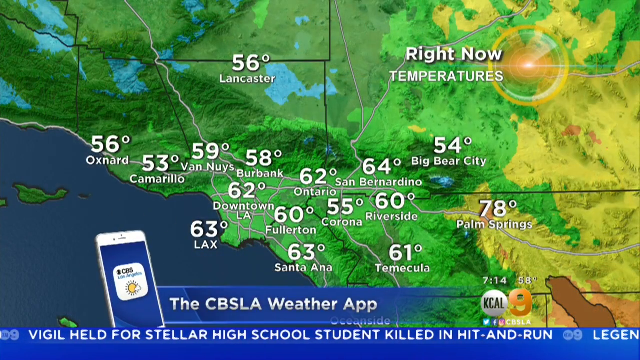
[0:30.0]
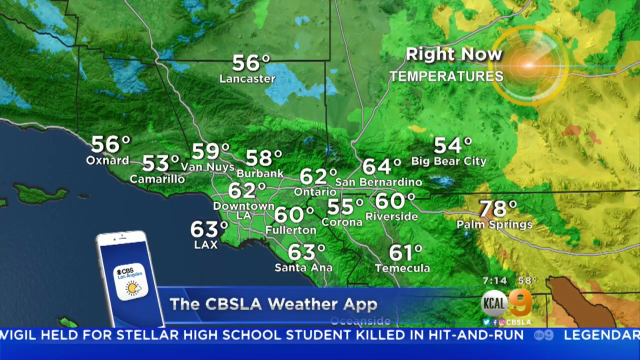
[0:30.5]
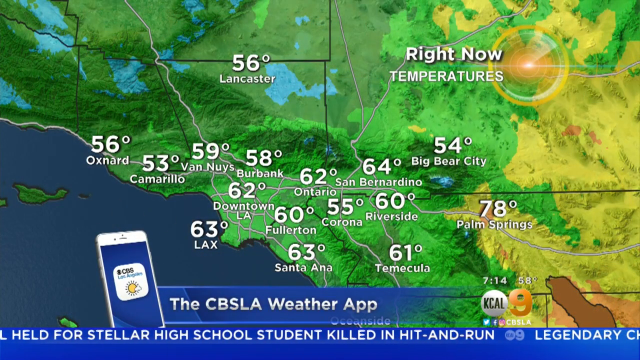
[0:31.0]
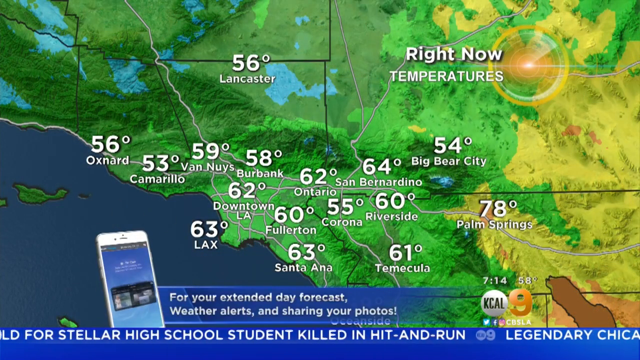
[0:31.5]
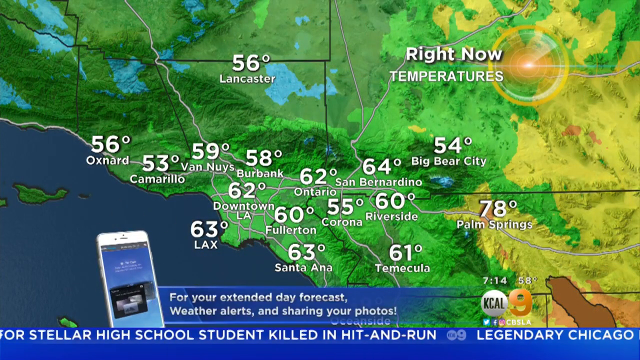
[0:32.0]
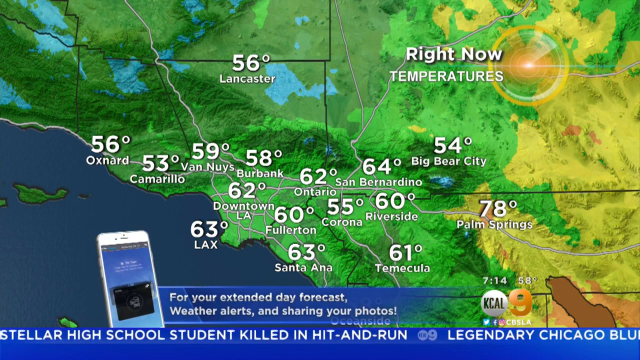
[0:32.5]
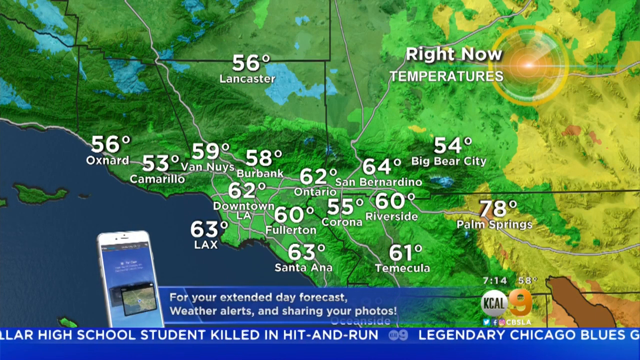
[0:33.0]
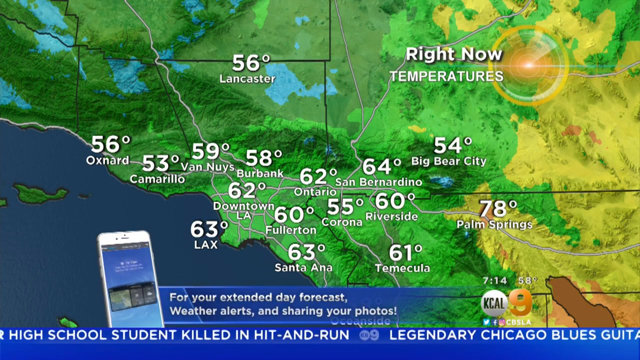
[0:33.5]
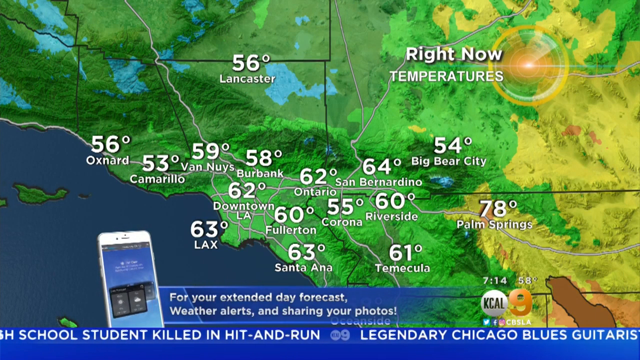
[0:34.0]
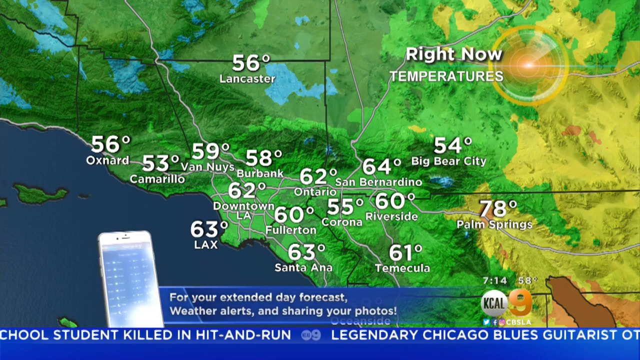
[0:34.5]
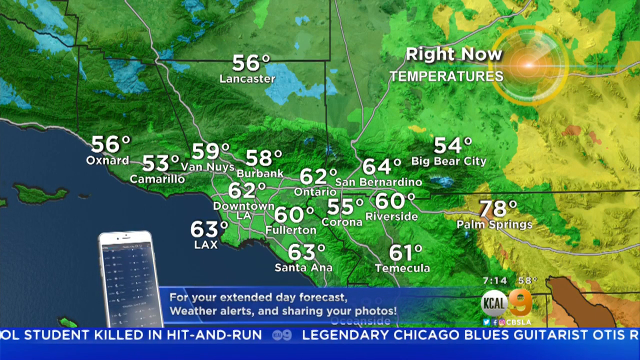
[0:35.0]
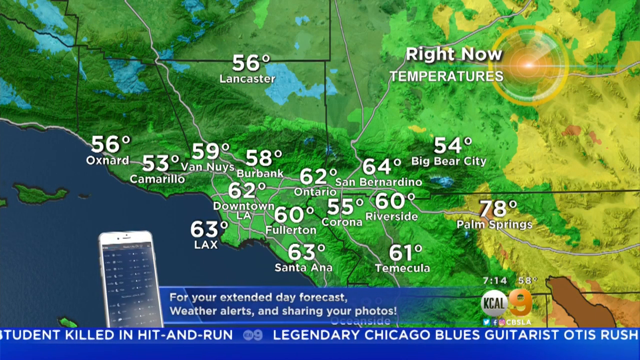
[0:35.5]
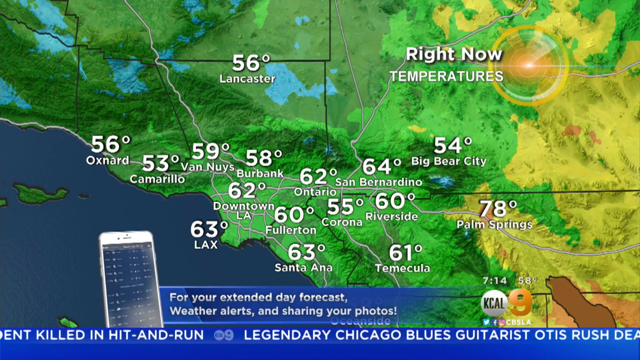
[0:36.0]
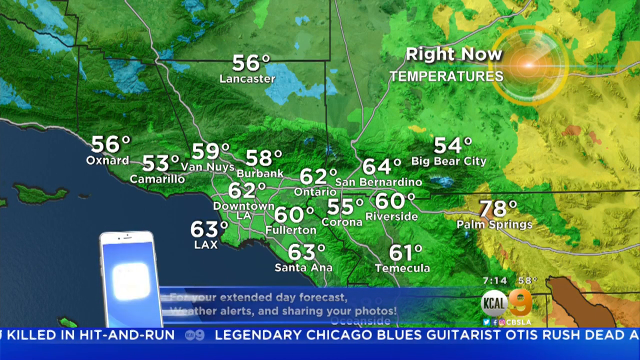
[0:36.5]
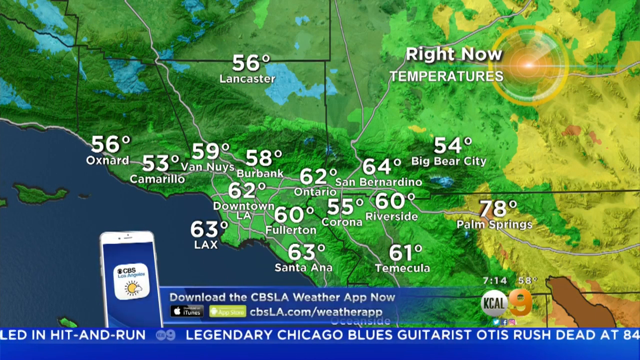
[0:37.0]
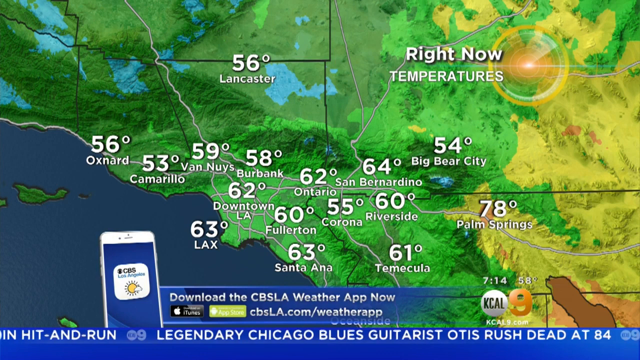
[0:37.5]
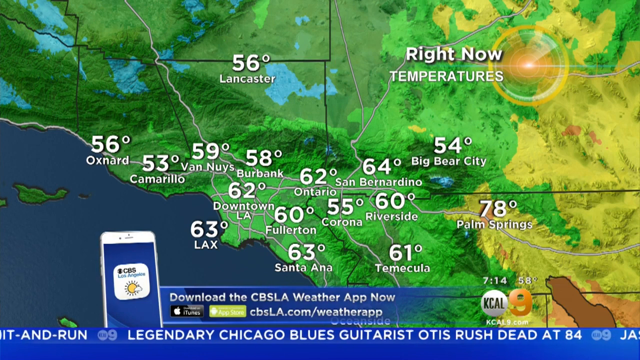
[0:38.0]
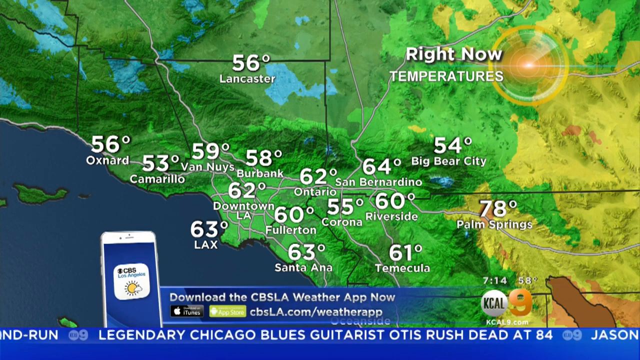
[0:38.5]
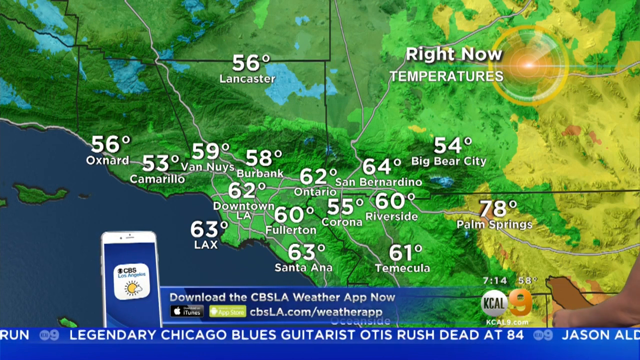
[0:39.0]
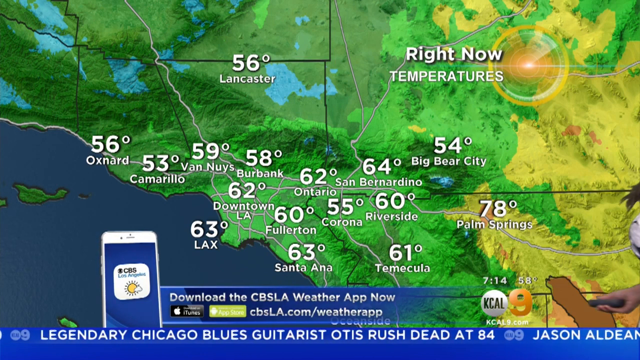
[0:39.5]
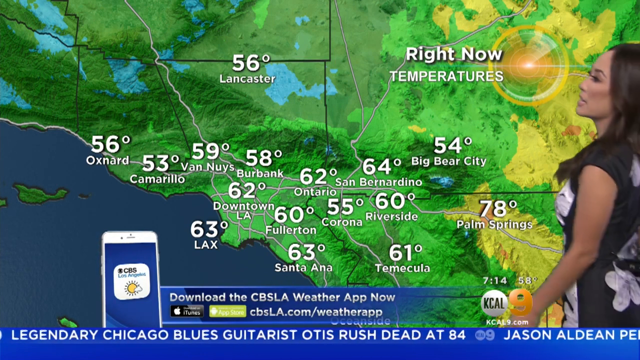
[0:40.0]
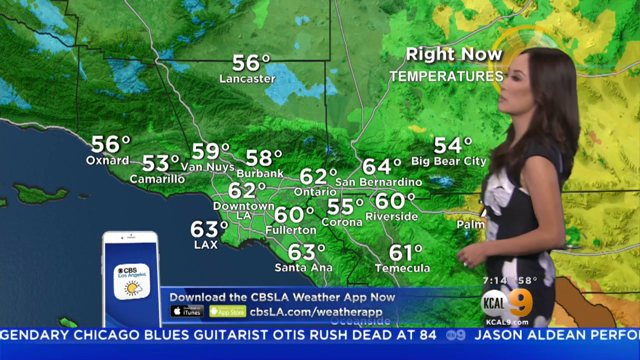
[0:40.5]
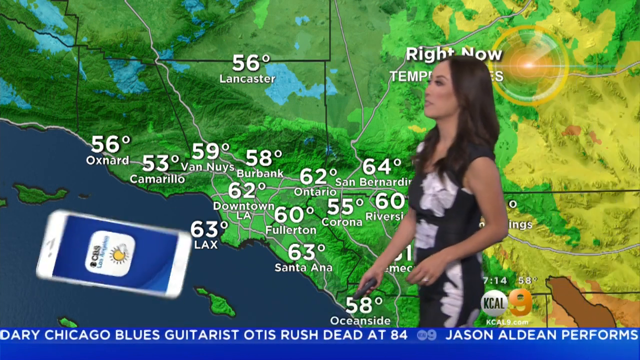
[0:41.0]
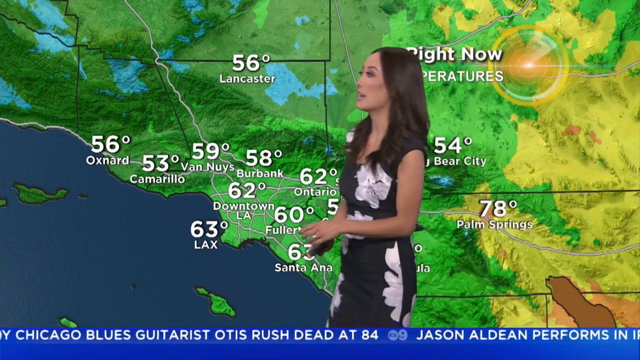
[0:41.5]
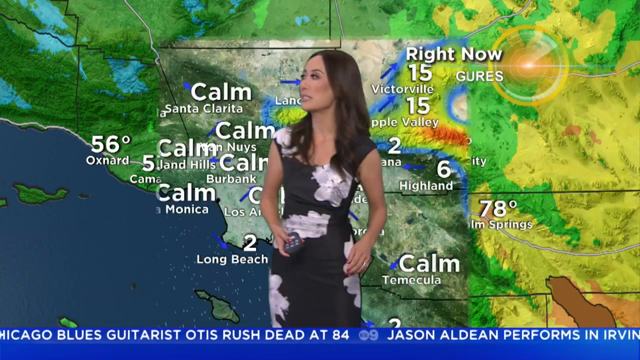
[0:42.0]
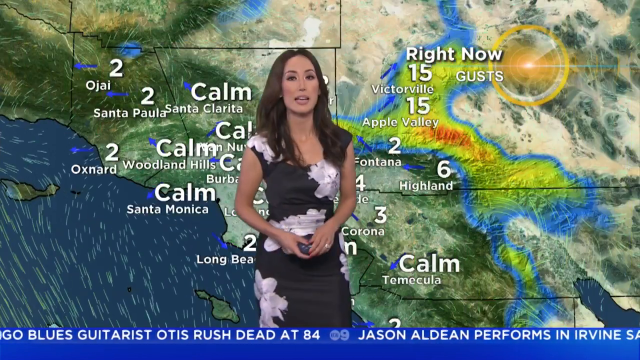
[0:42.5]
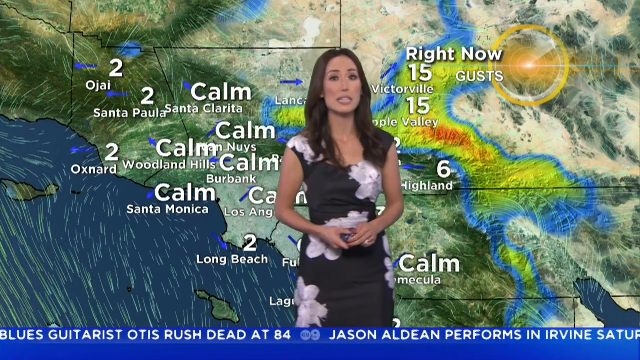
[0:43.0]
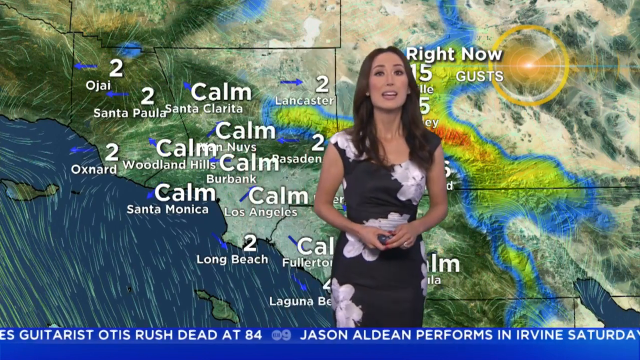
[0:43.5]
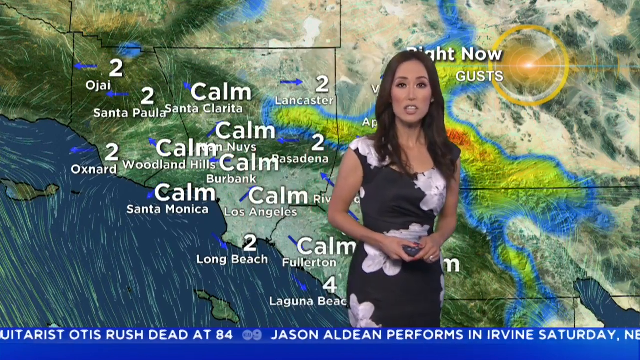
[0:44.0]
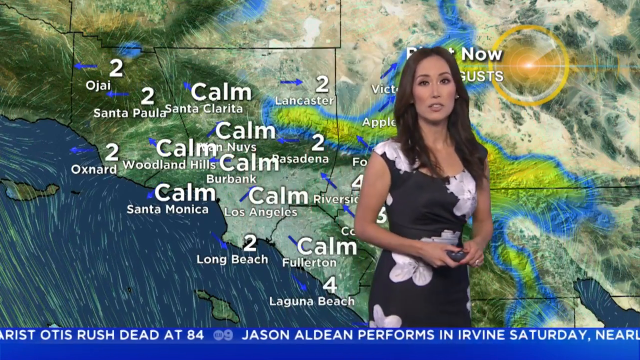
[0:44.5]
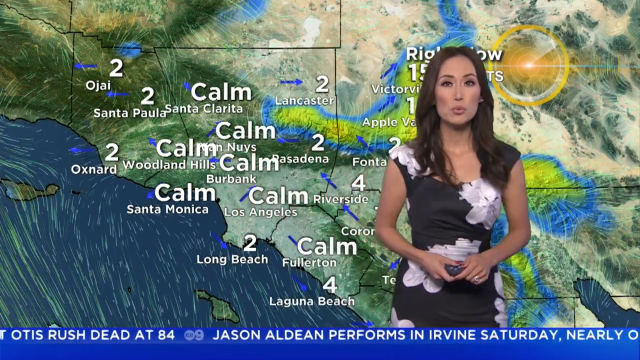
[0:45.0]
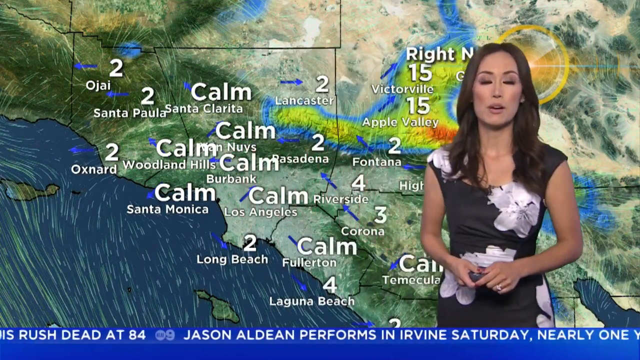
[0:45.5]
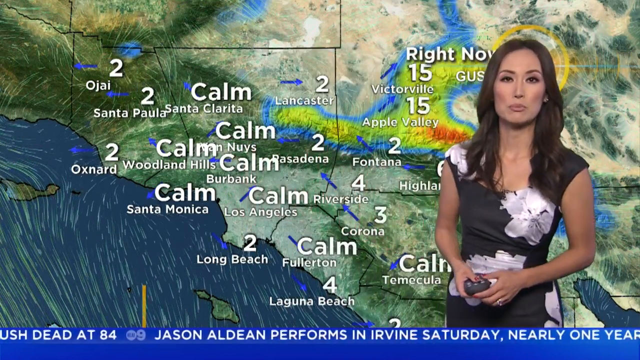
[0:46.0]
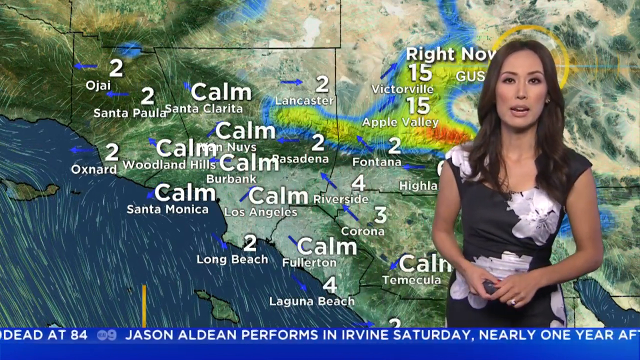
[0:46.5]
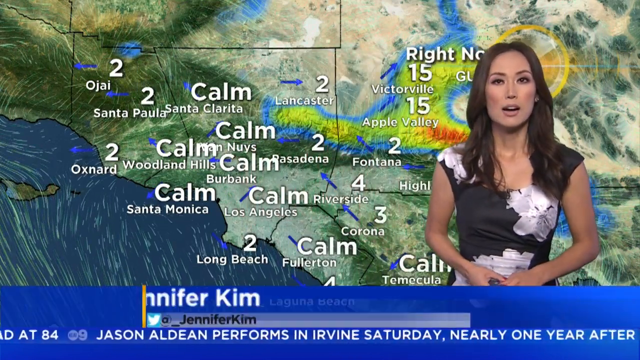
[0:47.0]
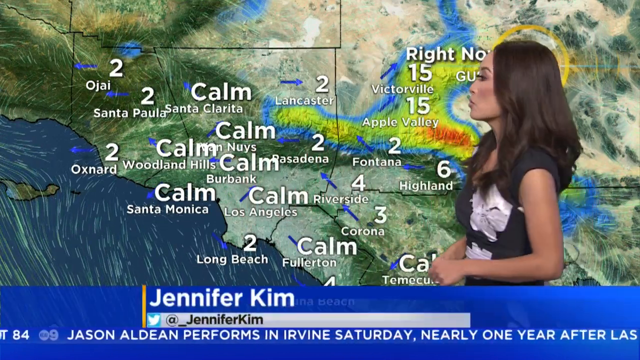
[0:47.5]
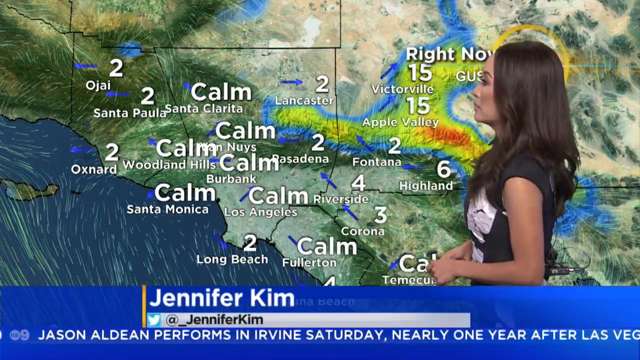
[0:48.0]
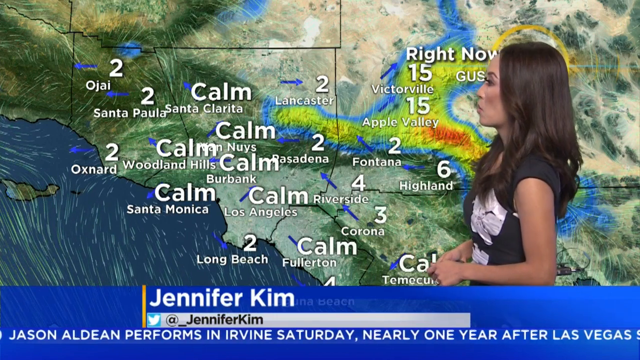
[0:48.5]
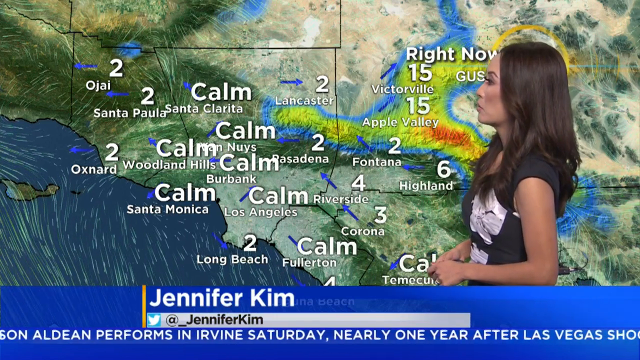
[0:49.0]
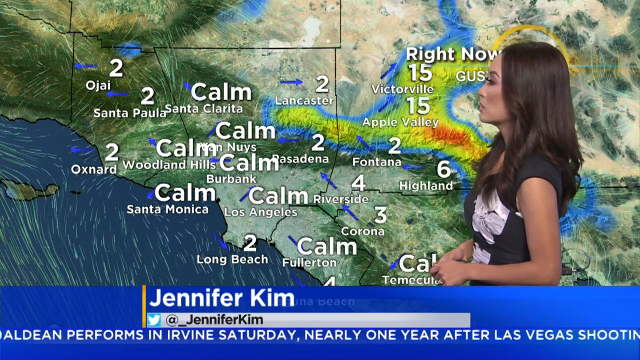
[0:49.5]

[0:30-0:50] What appears to be a map of California shows different cities with different temperatures: "Burbank, 58 degrees," "downtown LA, 62 degrees," "LAX, 63 degrees," "Ontario, 62 degrees," "Riverside, 60 degrees" and "Palm Springs, 78 degrees," along with "CBS LA." A brunette weather lady in a white and black dress, named Jennifer Kim, then comes on screen; she has great teeth and holds a little clicker in her hand. The screen shows "calm" for many of the wind readings nearby, with Laguna Beach at about four and Long Beach at two.